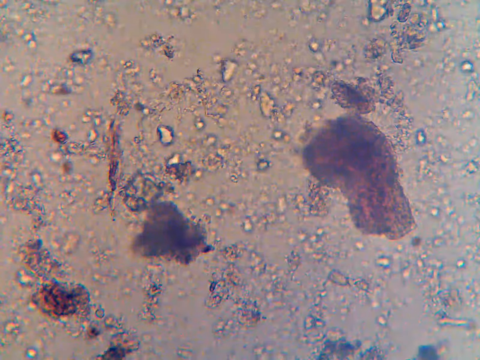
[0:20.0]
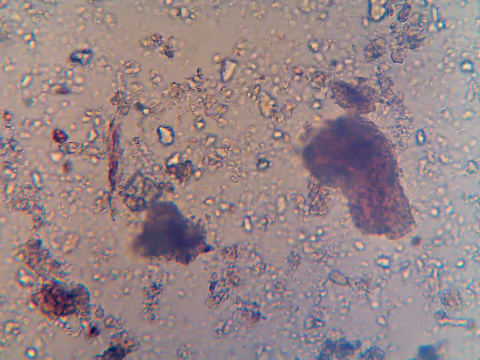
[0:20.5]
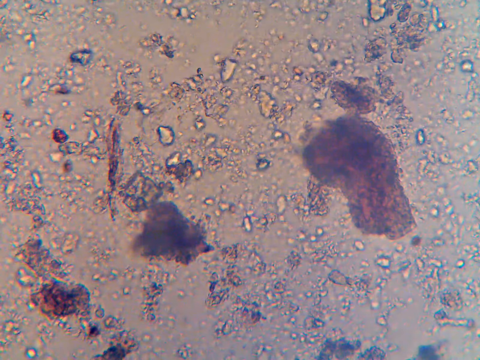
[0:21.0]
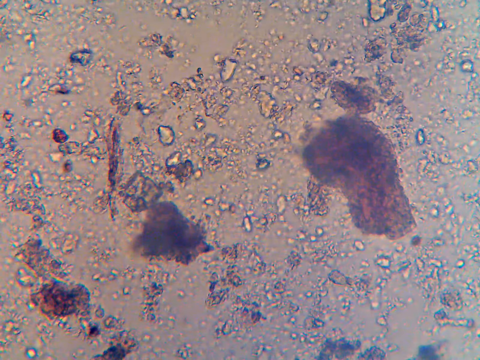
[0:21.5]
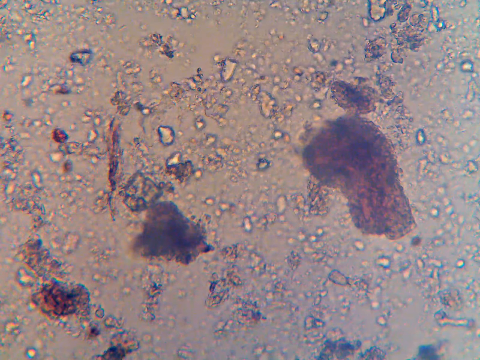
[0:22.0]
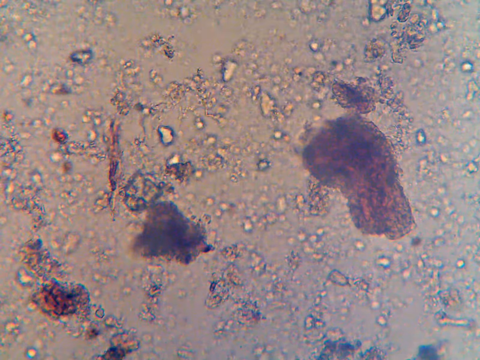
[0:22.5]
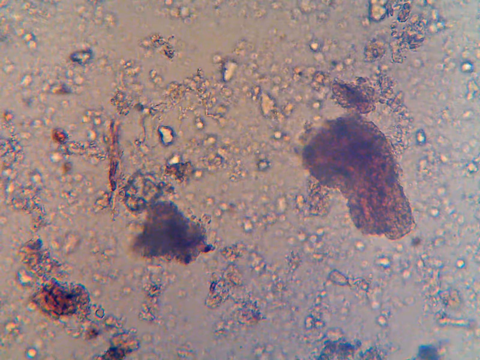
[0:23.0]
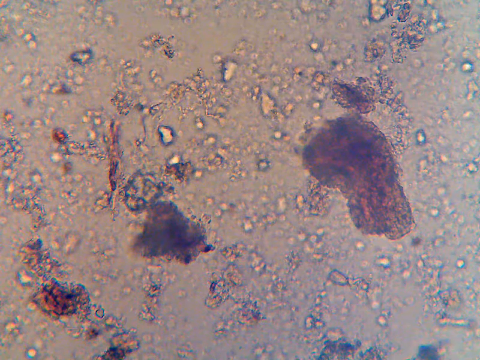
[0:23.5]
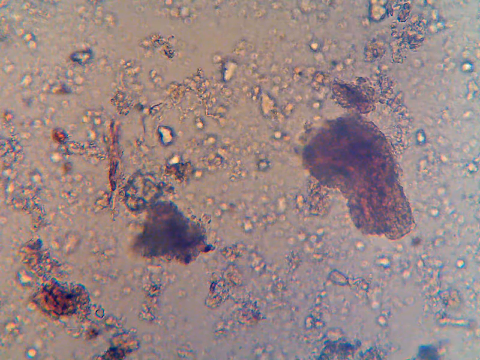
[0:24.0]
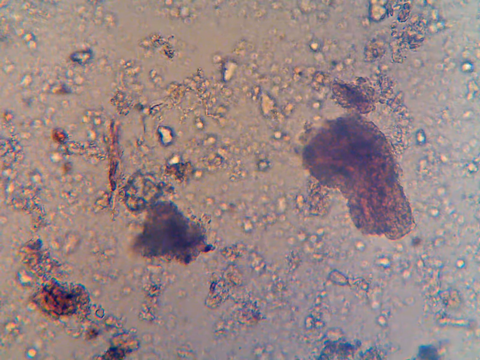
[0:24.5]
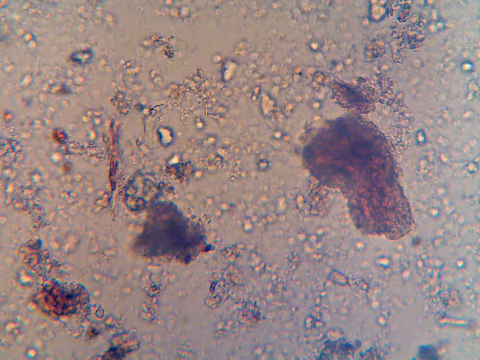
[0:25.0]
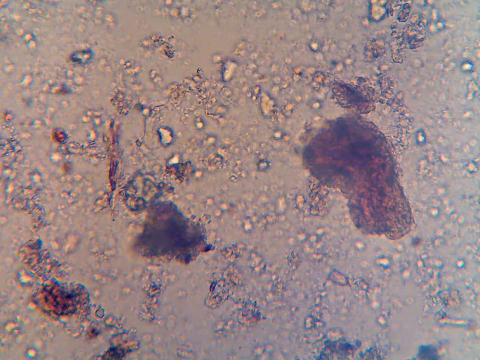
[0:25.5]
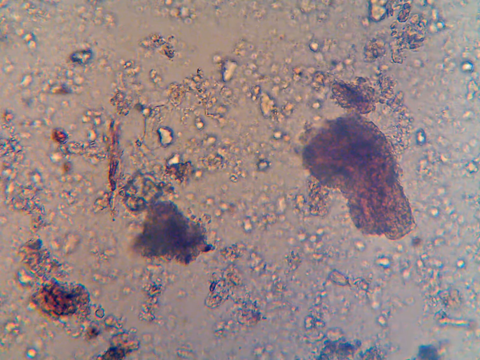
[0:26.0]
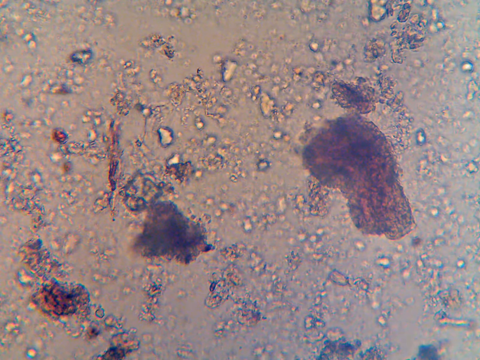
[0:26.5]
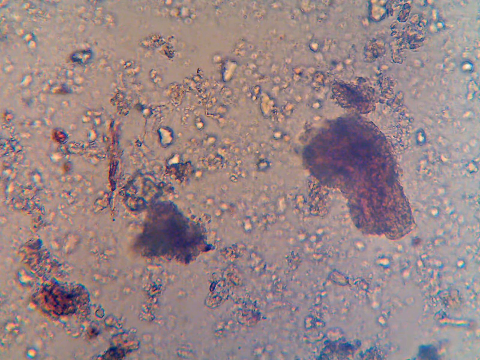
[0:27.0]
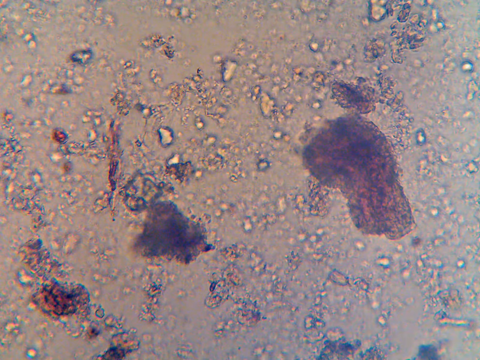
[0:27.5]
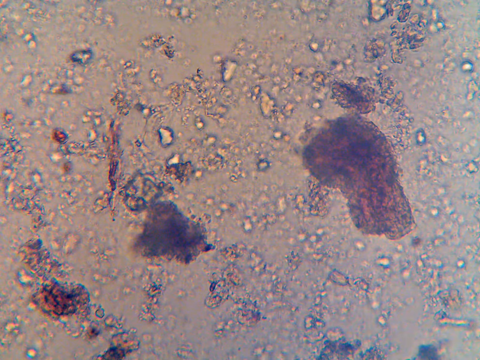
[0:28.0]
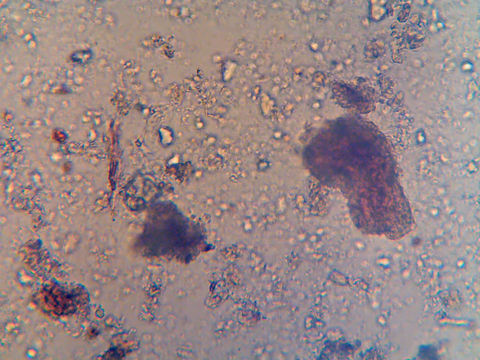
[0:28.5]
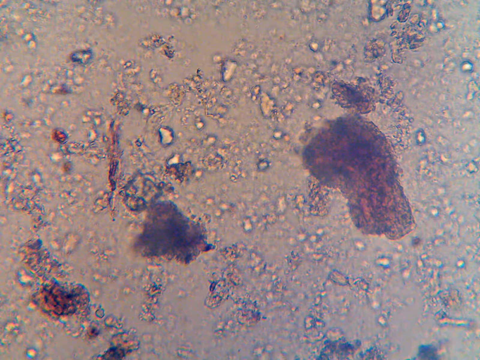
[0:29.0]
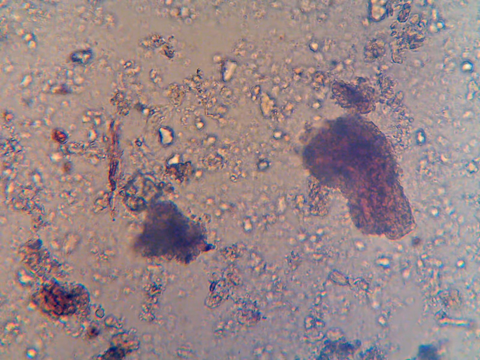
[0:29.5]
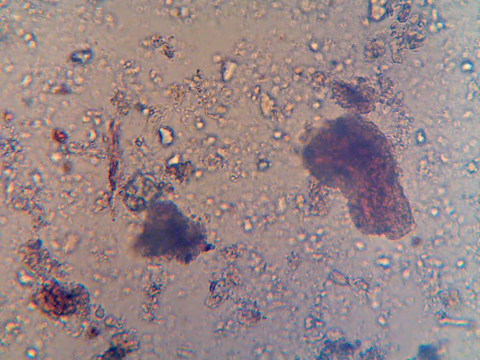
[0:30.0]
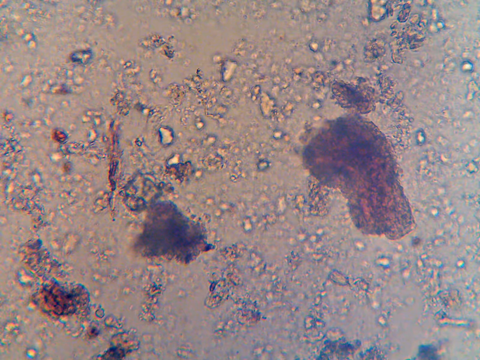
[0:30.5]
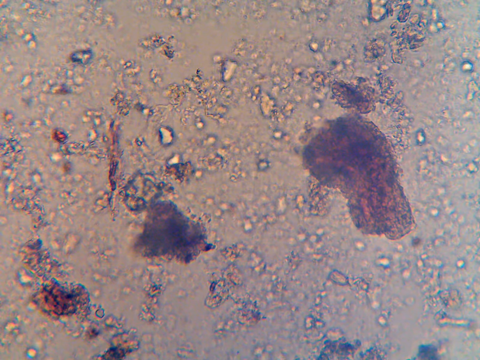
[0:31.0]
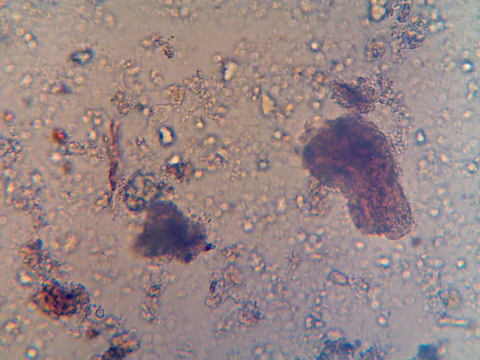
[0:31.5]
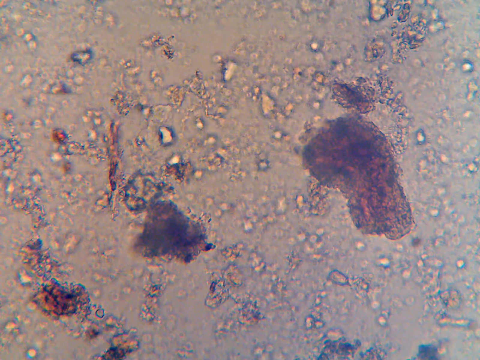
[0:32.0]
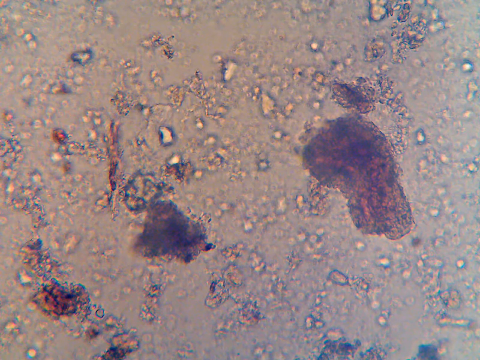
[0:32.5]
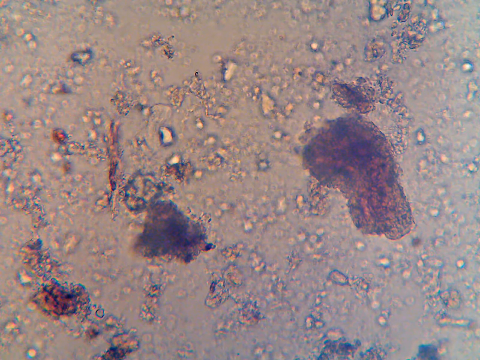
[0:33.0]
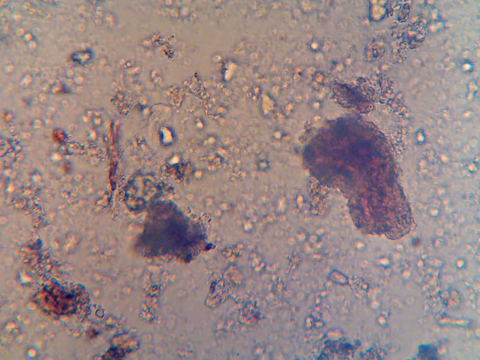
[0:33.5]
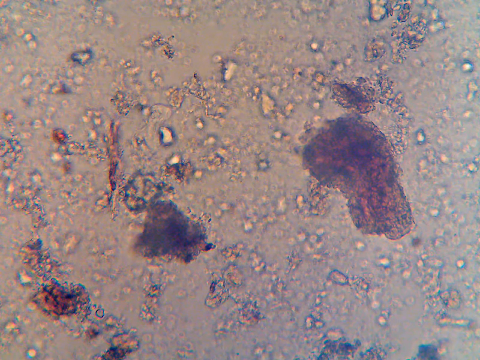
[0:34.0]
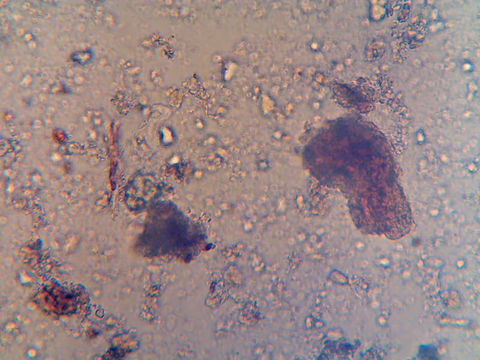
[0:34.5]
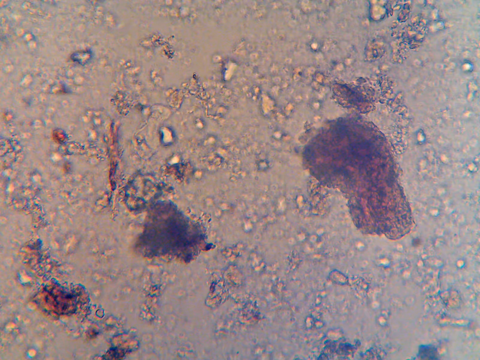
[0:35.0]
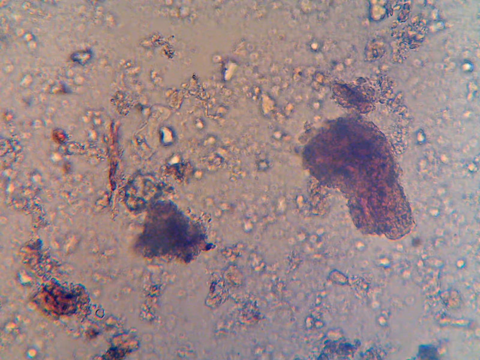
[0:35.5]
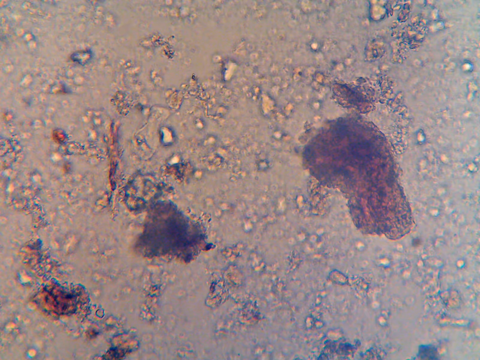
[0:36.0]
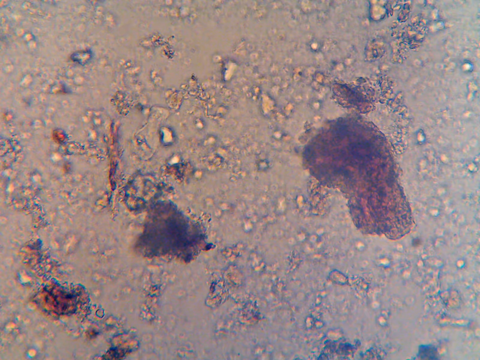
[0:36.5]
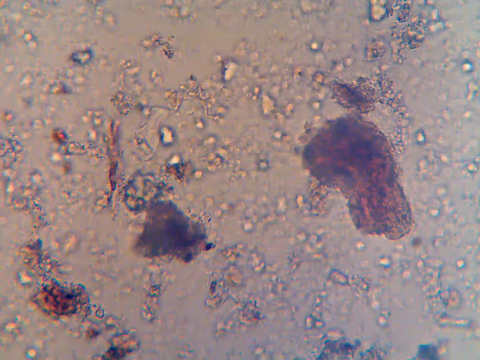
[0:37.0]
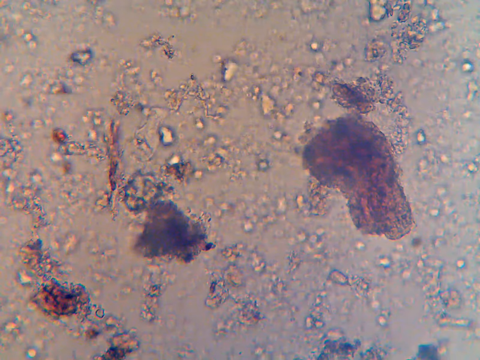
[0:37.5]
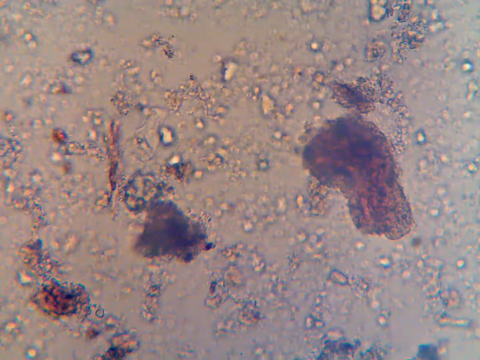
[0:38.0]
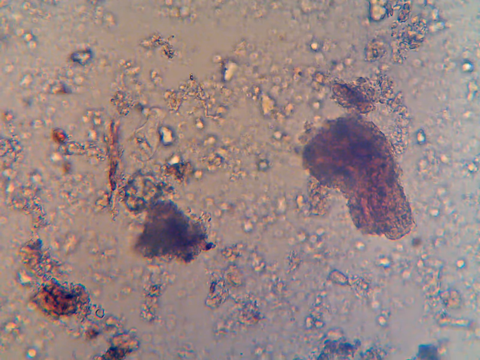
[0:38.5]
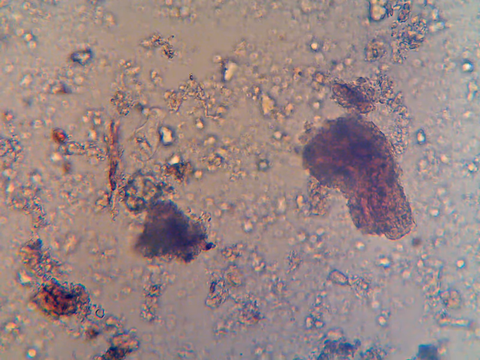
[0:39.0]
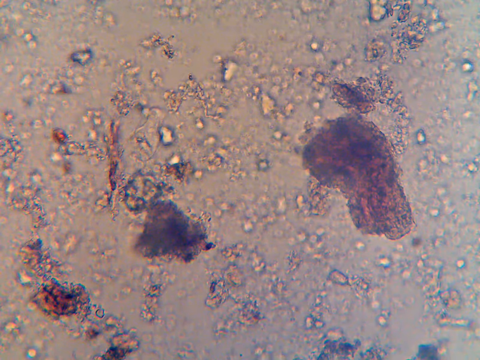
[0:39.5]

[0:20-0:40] The view appears to come through some kind of high-powered microscope, maybe an electronic microscope, looking at a sample. It seems to be focusing, bringing out some parts of the sample while others go out of focus. There does not seem to be much movement in the sample itself. There are many circular shapes on a brown-beige background. Three larger blobs stand out: one on the right in the center of the screen that looks almost like a number eight, a more triangular blob that is slightly more central, and at the bottom left what looks like a cluster of many little orange and black dots. Throughout, the image seems to sharpen and the contrast changes; there may be some very slight movement.